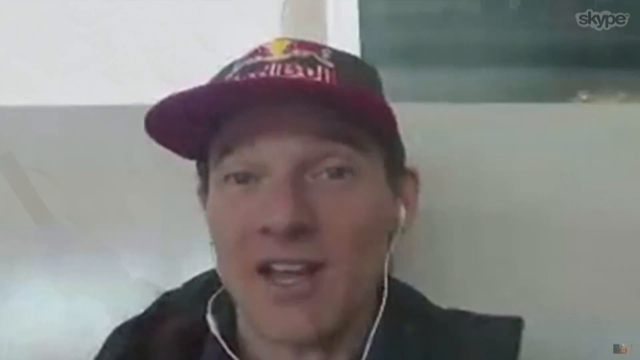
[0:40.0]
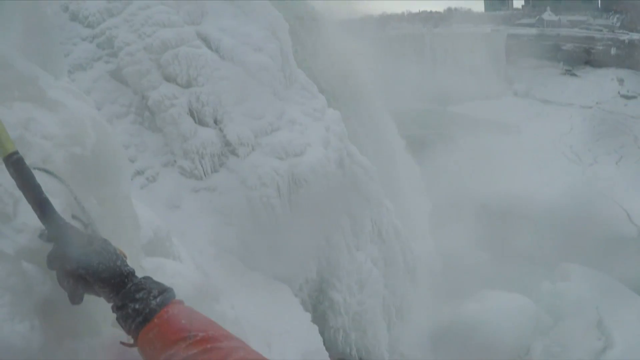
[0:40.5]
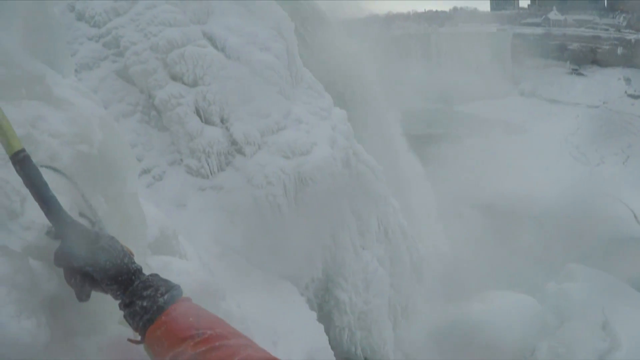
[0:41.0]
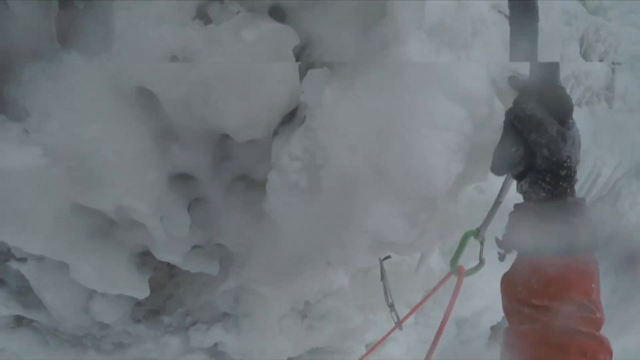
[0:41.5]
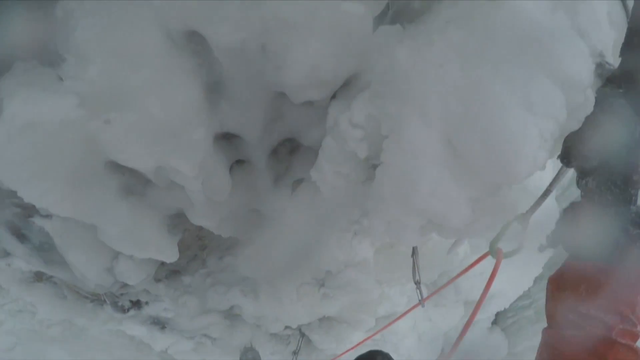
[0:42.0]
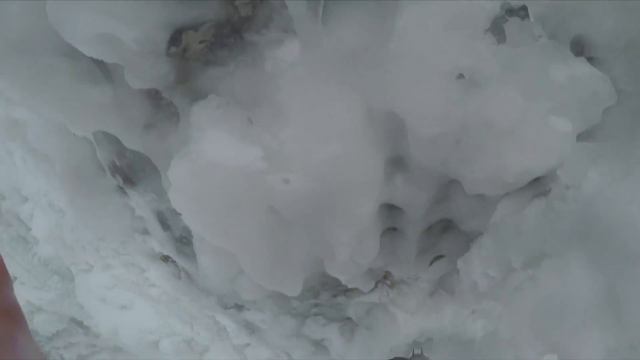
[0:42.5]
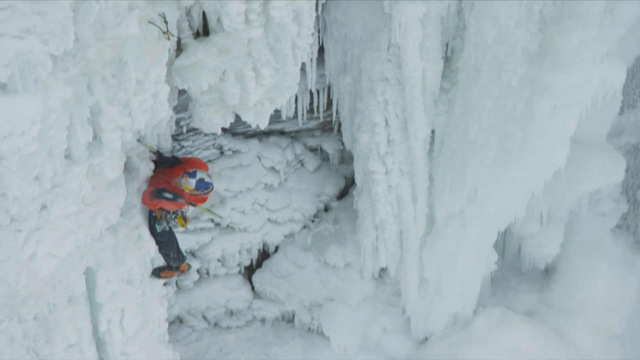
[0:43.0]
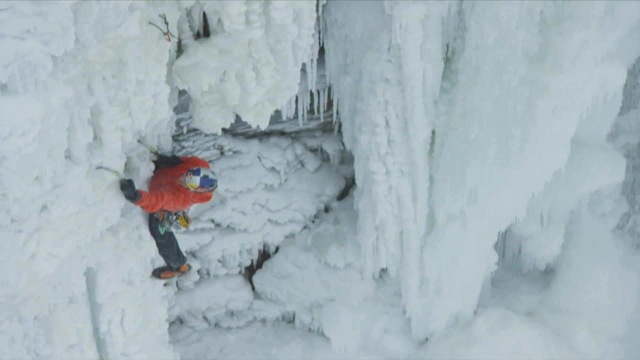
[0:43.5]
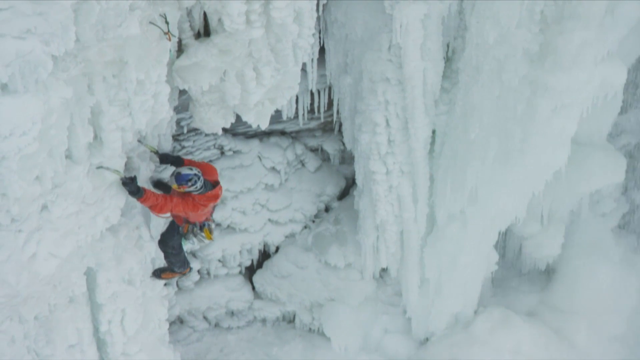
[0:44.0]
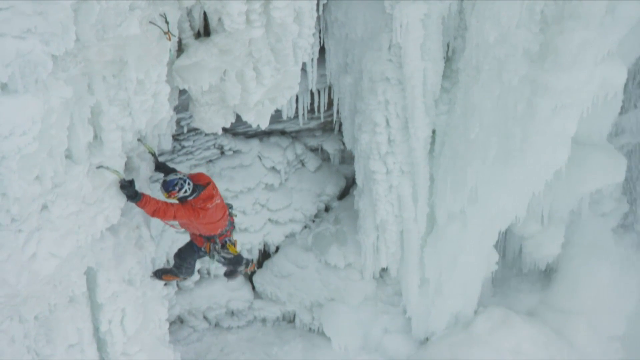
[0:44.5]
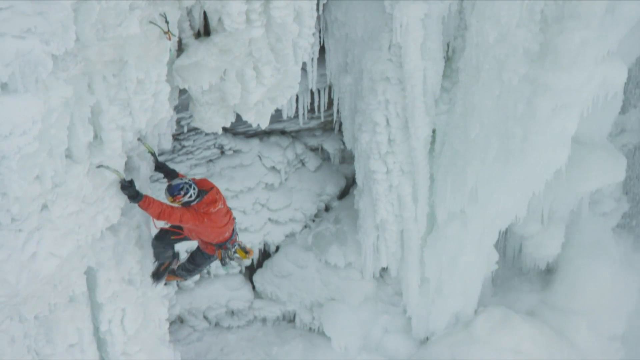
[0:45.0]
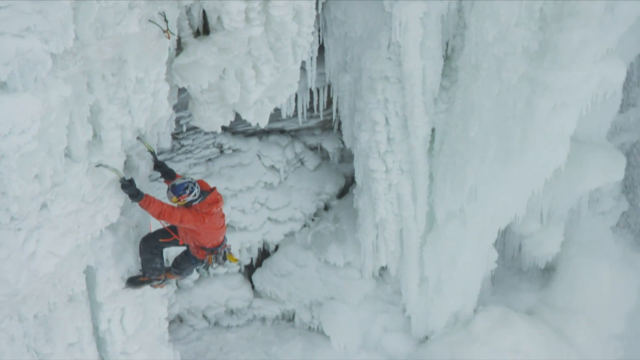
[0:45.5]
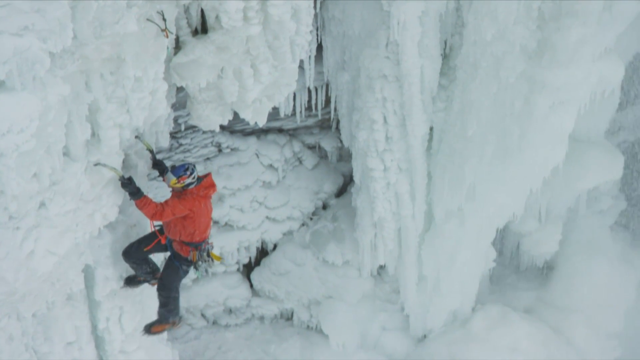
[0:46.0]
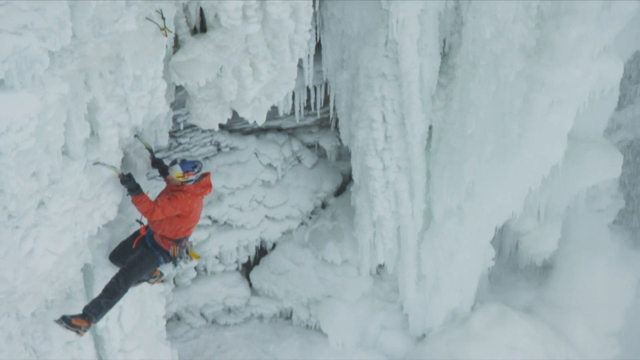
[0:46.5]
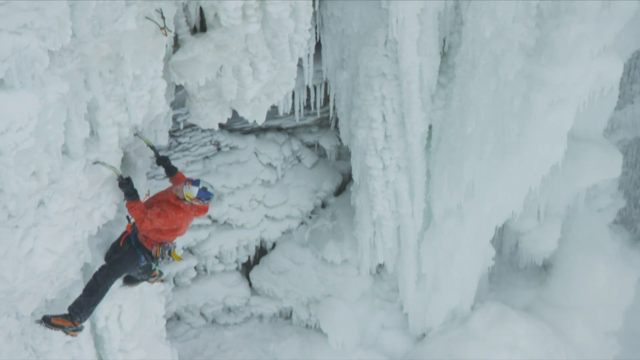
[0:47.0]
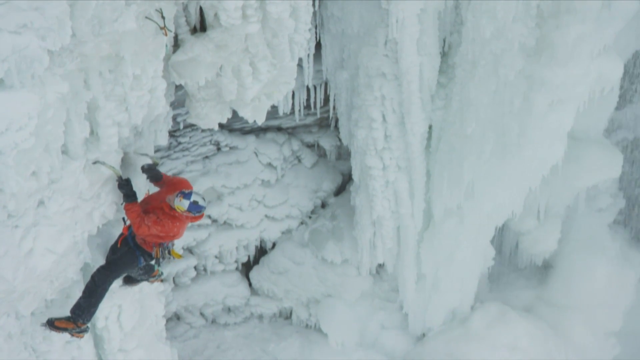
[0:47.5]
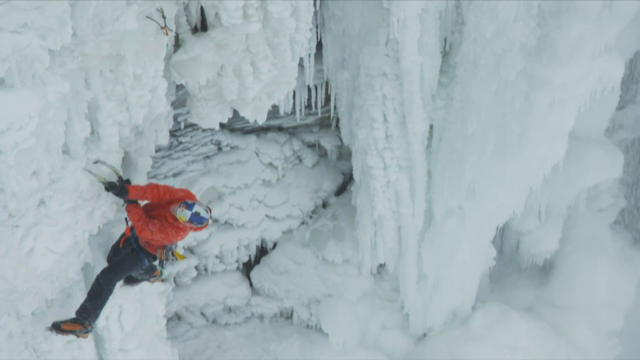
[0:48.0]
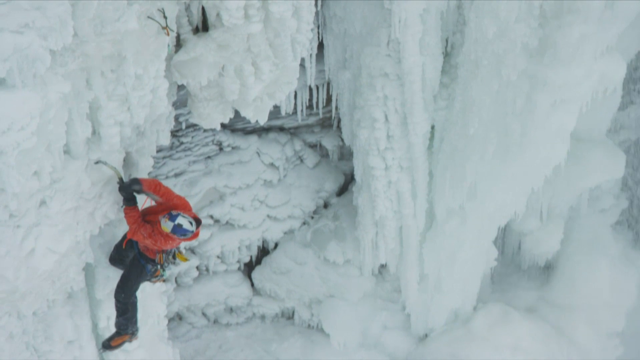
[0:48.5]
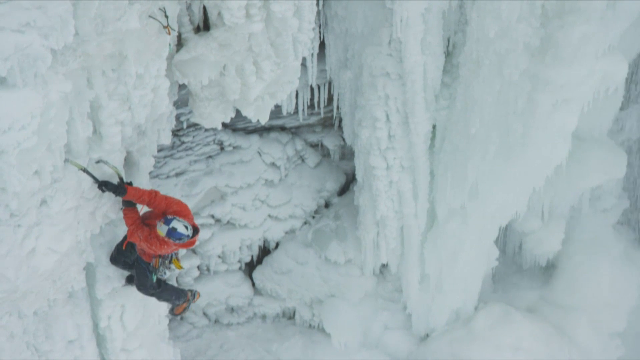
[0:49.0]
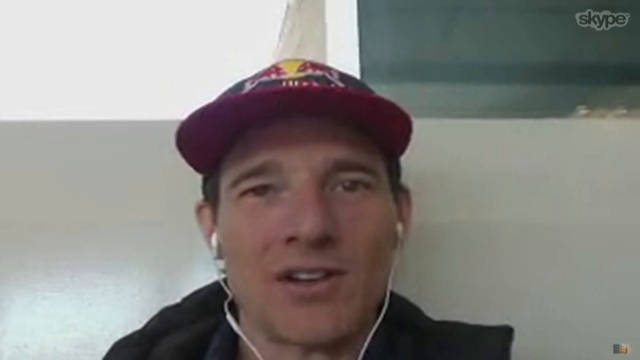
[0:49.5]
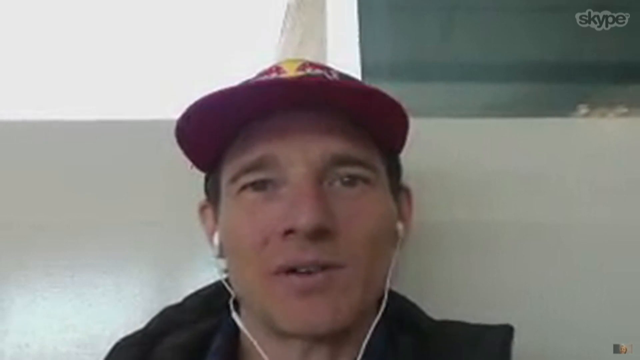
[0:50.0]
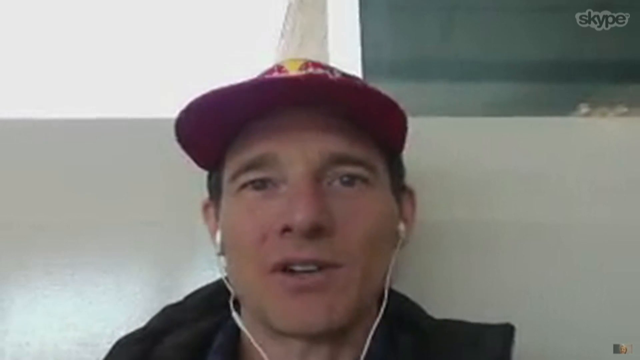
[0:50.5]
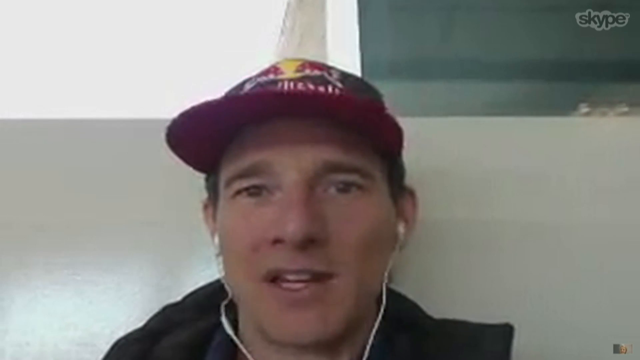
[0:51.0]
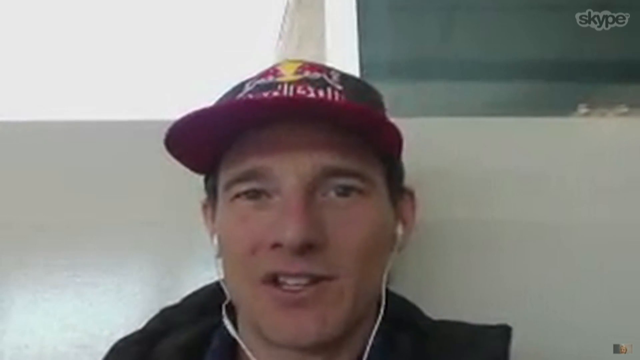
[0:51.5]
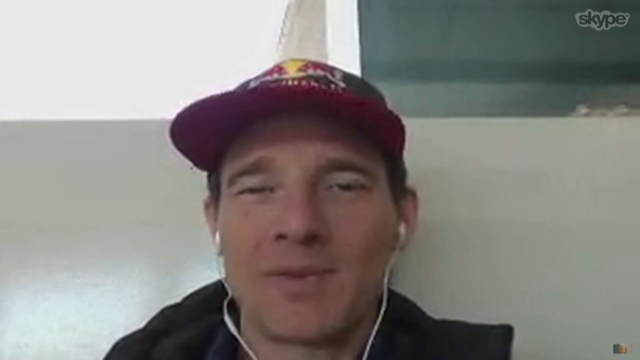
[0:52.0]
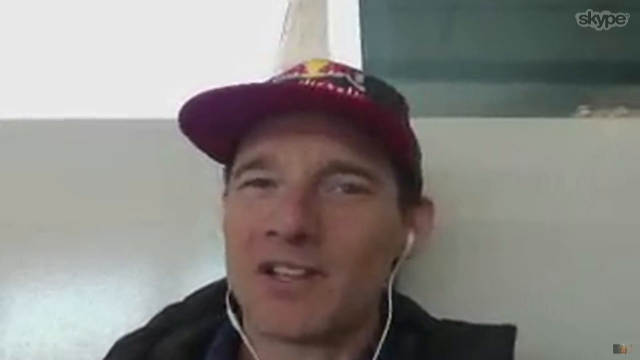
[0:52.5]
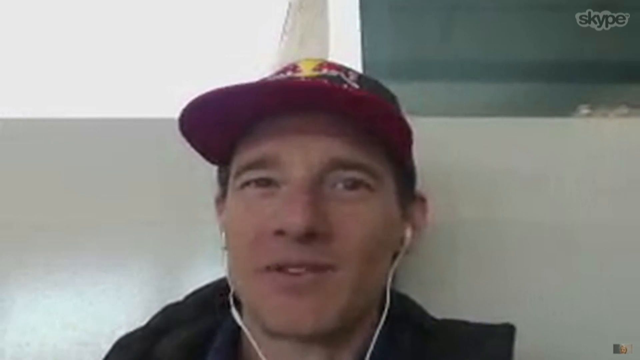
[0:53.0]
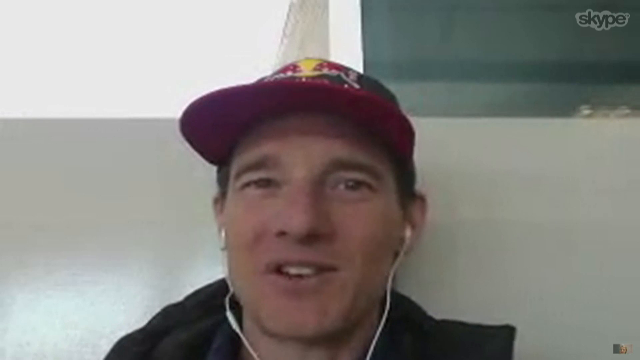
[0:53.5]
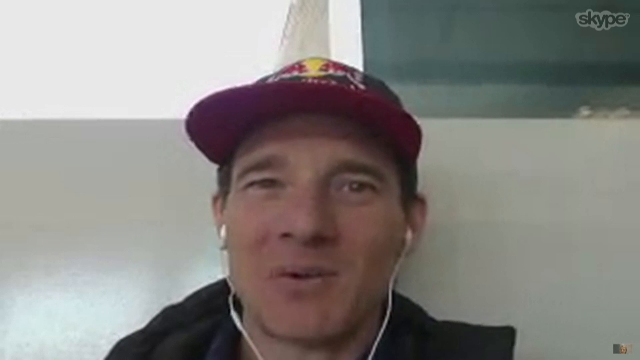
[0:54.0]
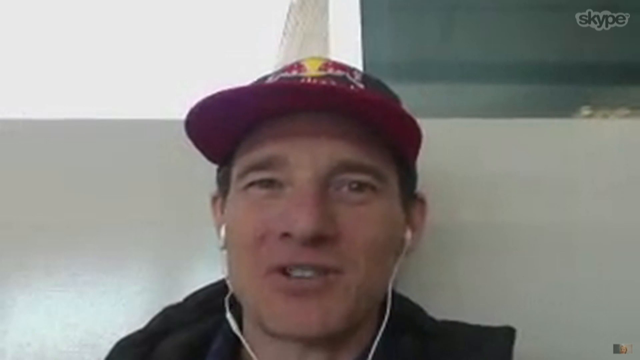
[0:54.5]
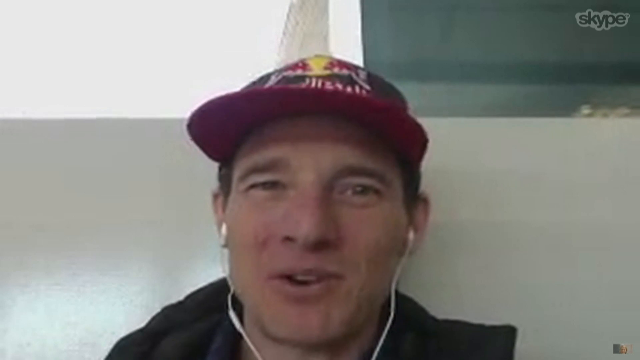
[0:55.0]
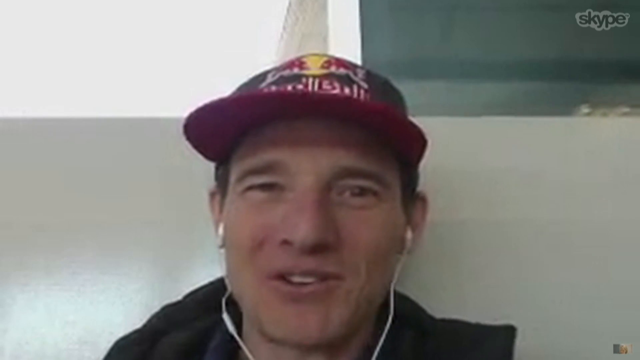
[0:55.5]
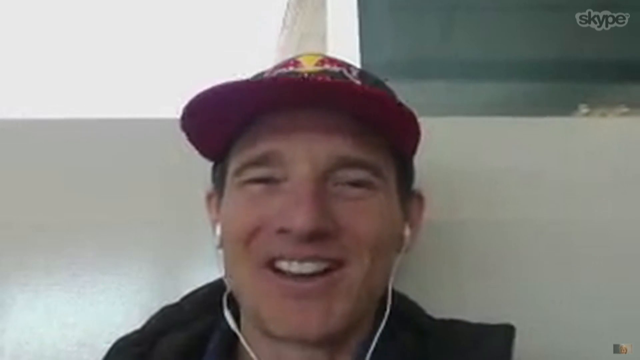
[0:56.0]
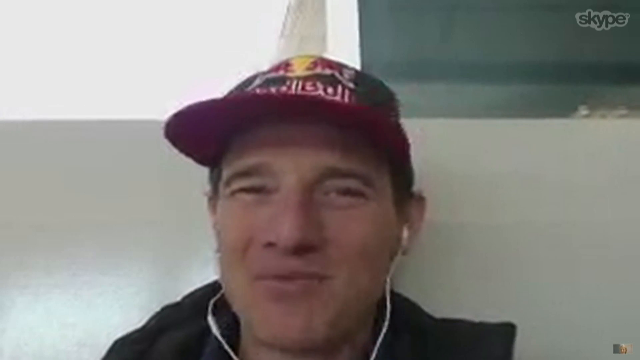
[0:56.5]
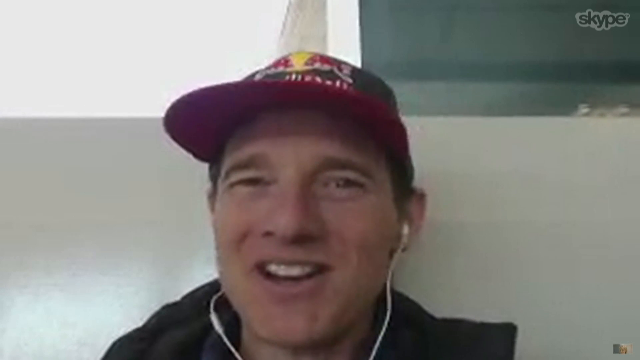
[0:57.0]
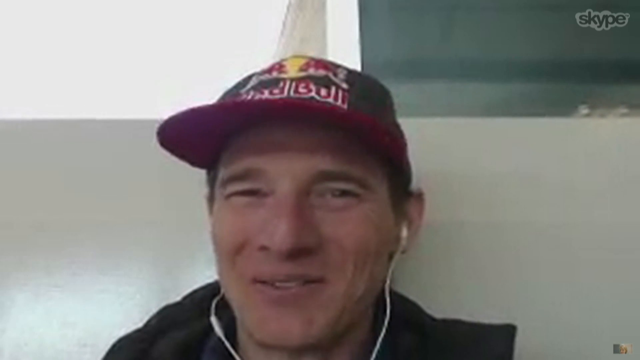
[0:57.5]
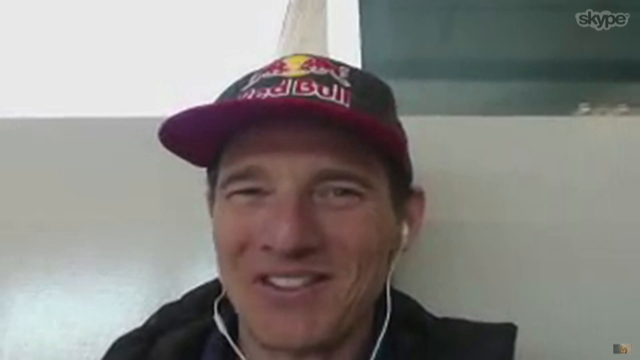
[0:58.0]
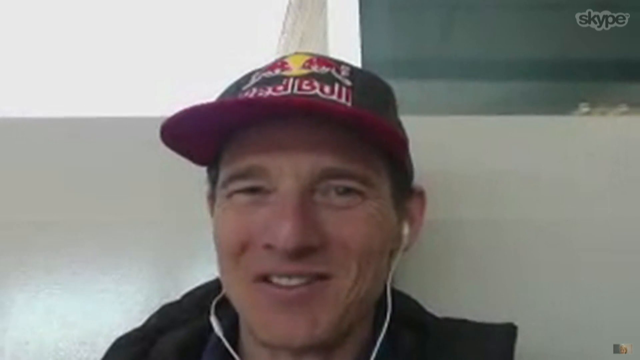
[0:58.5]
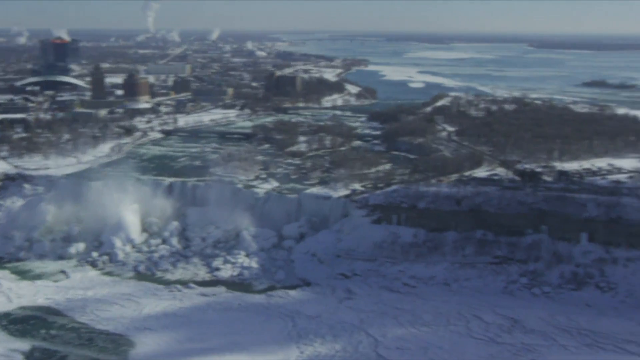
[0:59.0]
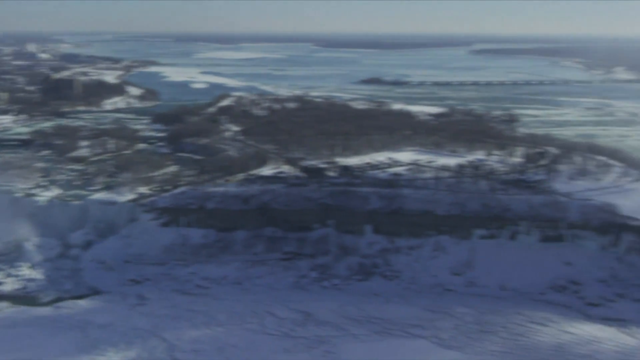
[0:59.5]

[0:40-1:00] A close-up shows some of the ice and its formations, much of it shiny. The shot returns to the man in red with the white and purple quartered hat. He changes and crosses his footing, moving laterally upward toward his left. The Skype call is shown, with the man talking in front of a kind of white background; he smiles. A wider shot, apparently from above the falls, gives a general scope, showing steaming areas above the water toward the right. The falls area shown is mostly white, though some tree growth is visible, with some evergreens in the center, apparently near the banks of the river or lake that feeds the falls.